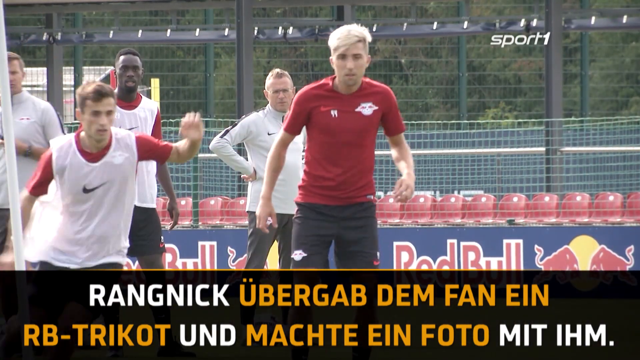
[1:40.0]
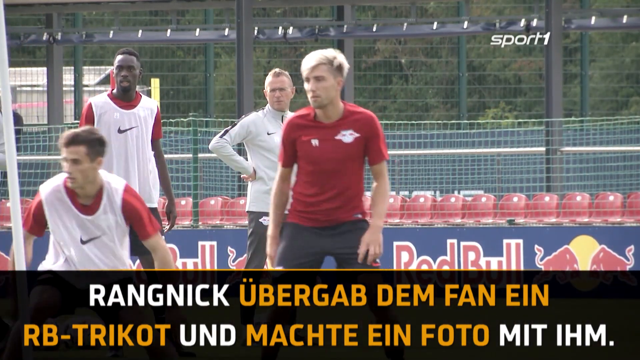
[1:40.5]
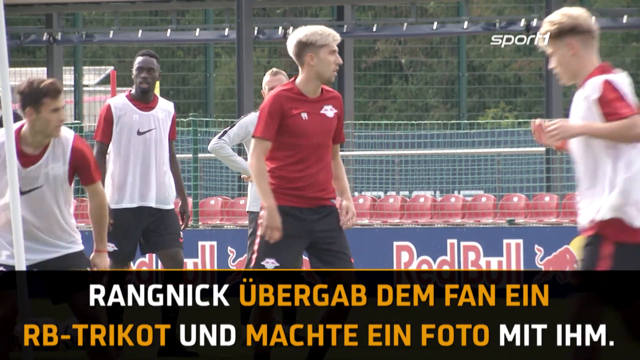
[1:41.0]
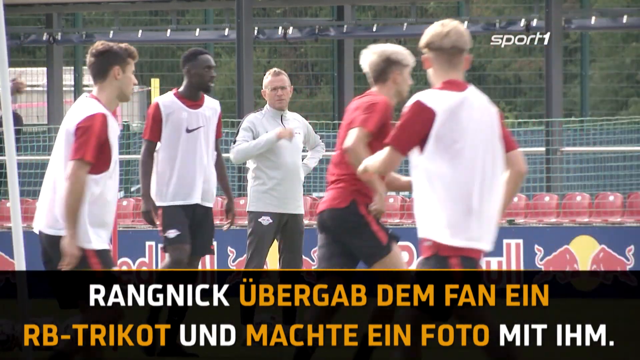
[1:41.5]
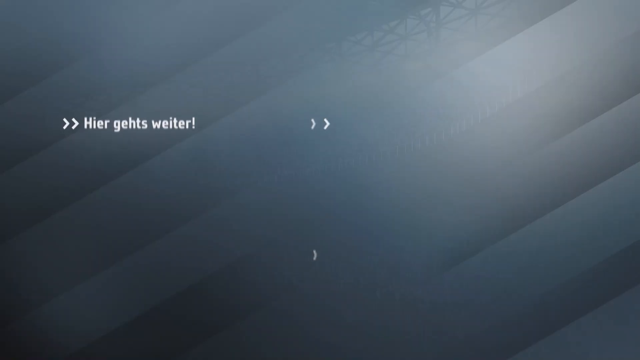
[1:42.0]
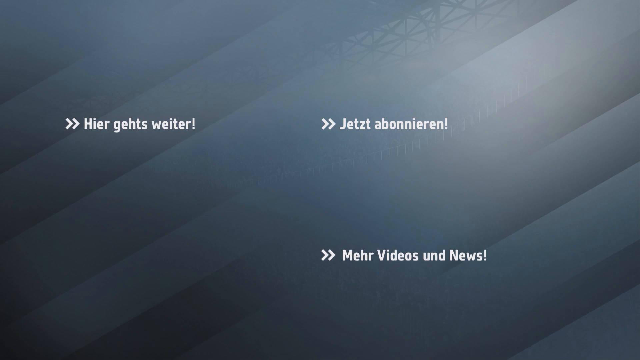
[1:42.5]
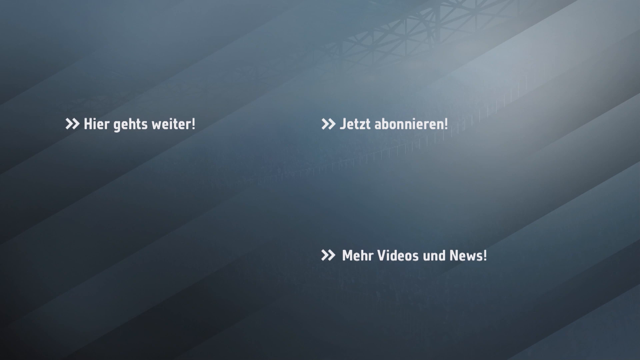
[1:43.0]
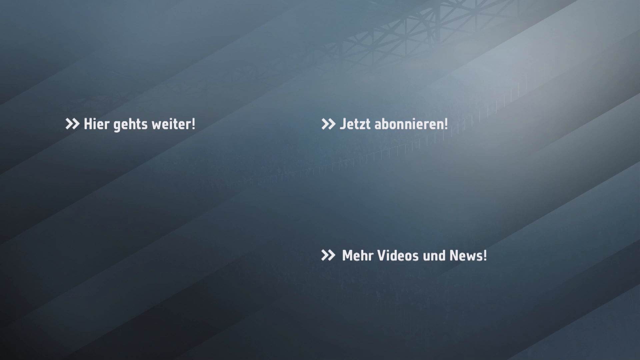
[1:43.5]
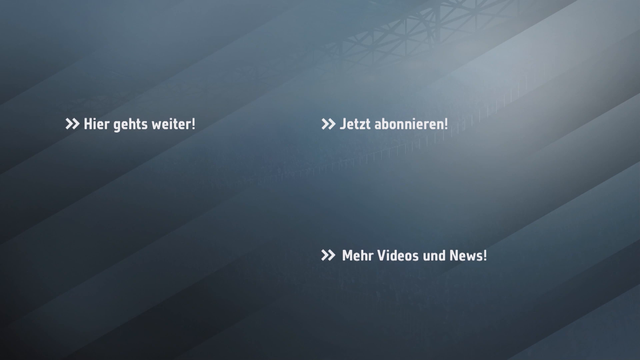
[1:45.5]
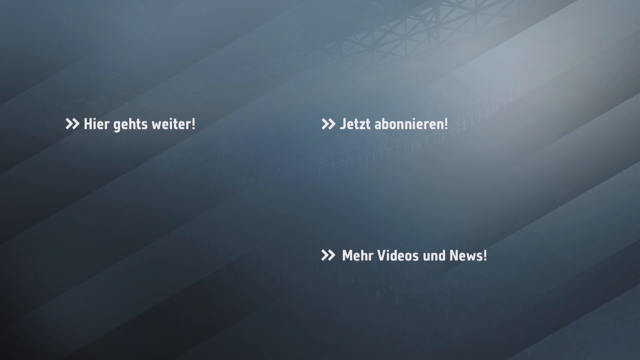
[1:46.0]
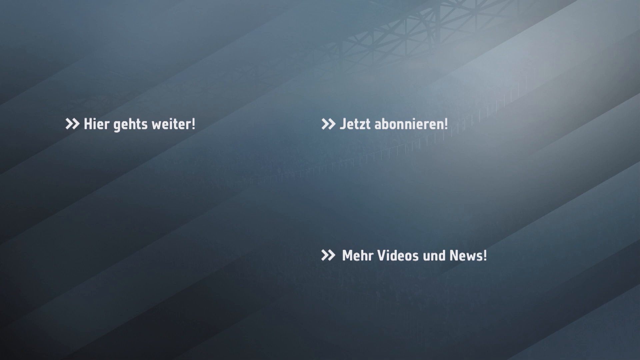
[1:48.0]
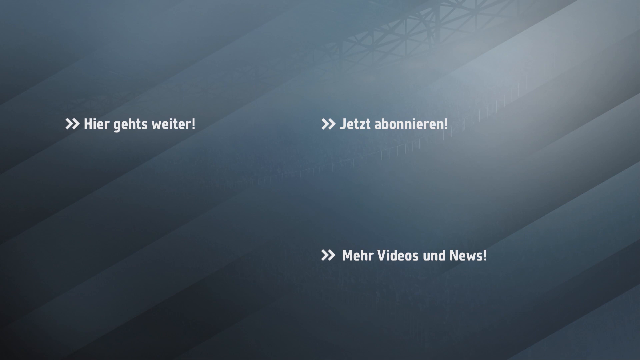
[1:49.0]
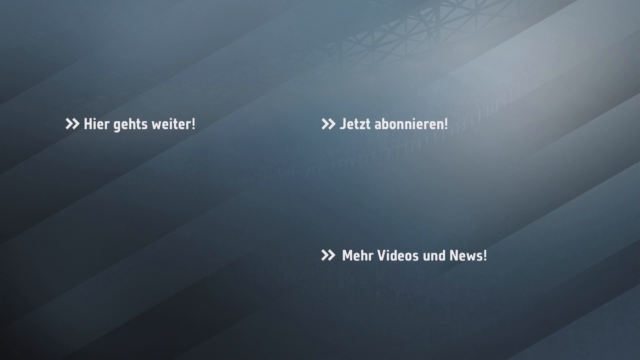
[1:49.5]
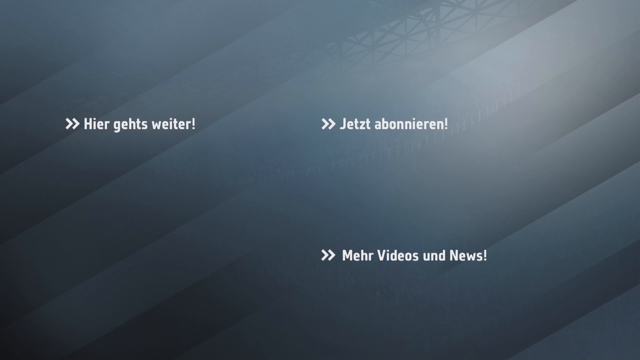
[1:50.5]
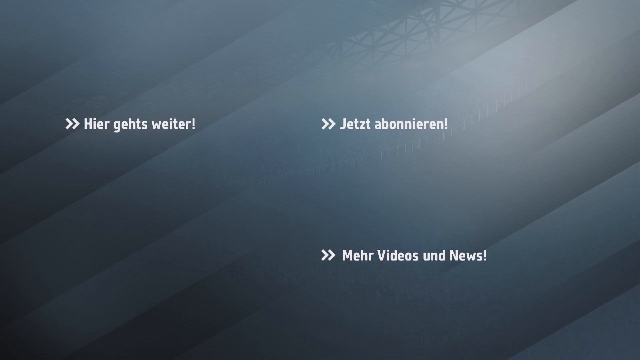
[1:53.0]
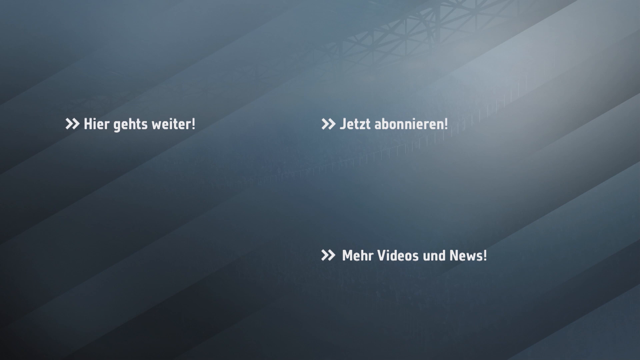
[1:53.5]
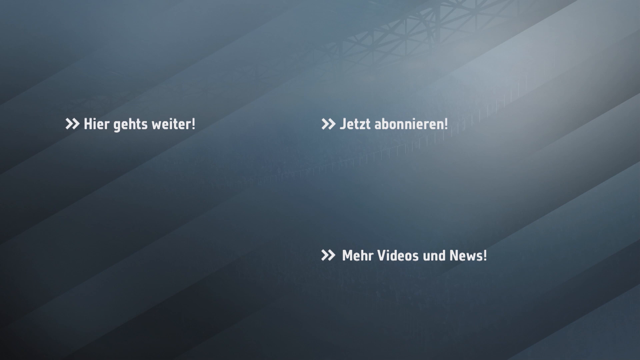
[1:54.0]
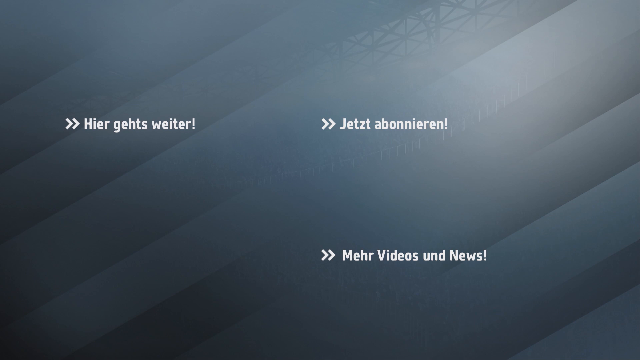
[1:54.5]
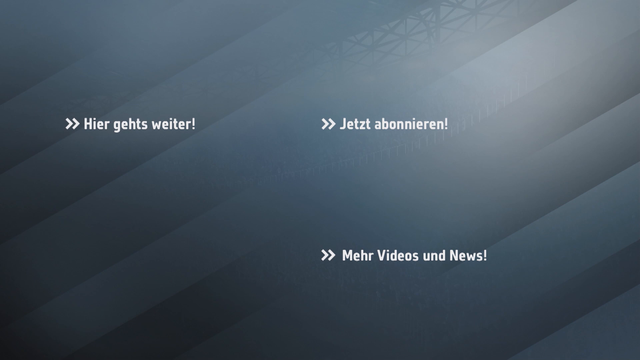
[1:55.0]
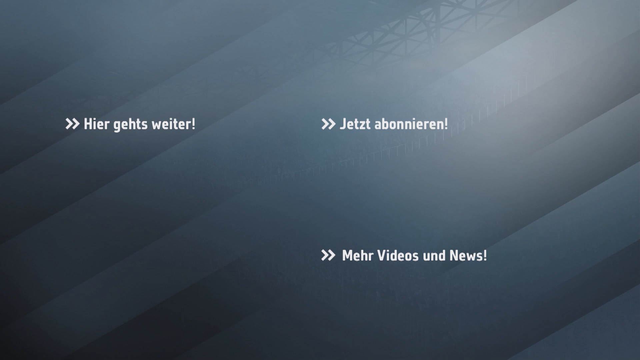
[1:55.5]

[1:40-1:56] Men in red jerseys play soccer, wearing white vests or other loose jerseys on top. The red jerseys are long sleeve or short sleeve, and the white jerseys are more of a tank top style. A man in the back, in a white long-sleeve zip-up jacket and sweatpants, looks like a coach; he stands with his hands on his hips, watching the others play. This footage lasts only a few seconds before the video ends with a gray screen showing white text with links that appear to be for other videos or networks. On the left side is a small thumbnail for another video showing two men in red jerseys. All of the text appears to be in German or a similar language.